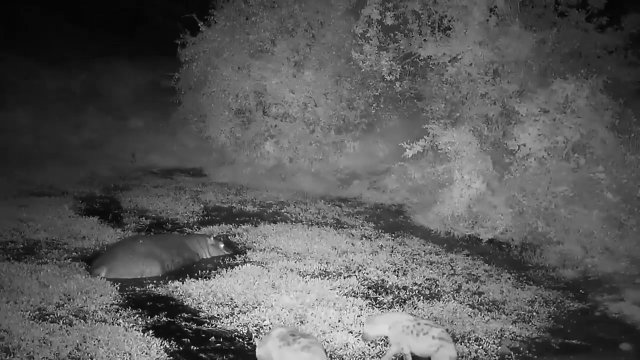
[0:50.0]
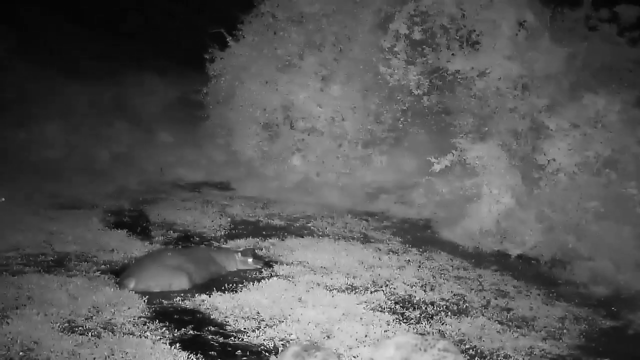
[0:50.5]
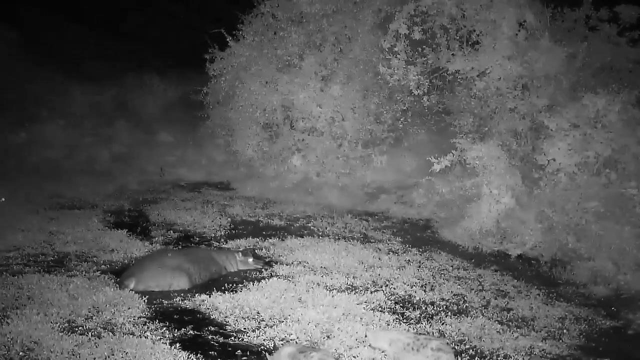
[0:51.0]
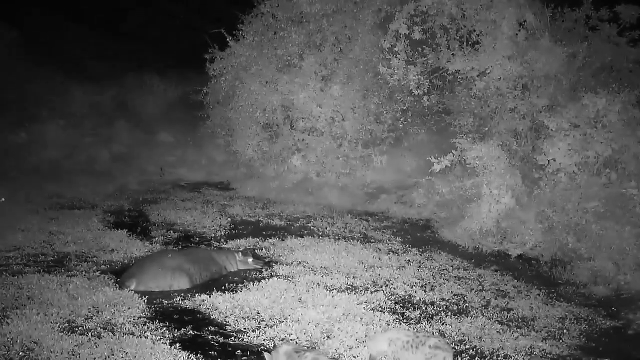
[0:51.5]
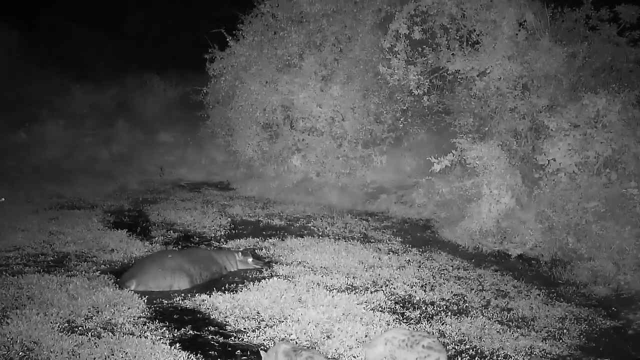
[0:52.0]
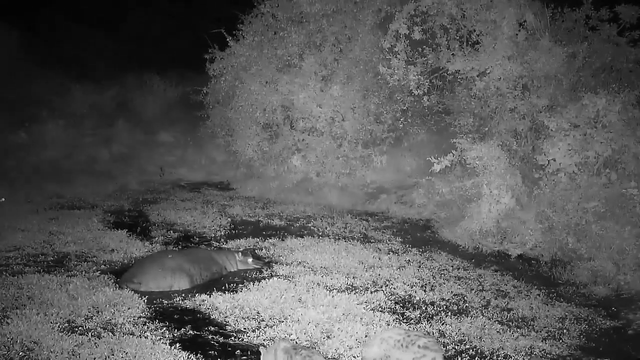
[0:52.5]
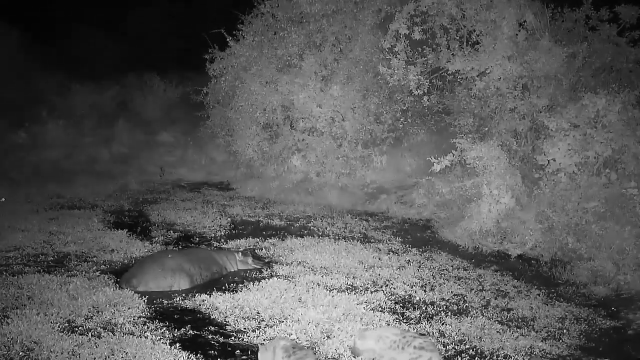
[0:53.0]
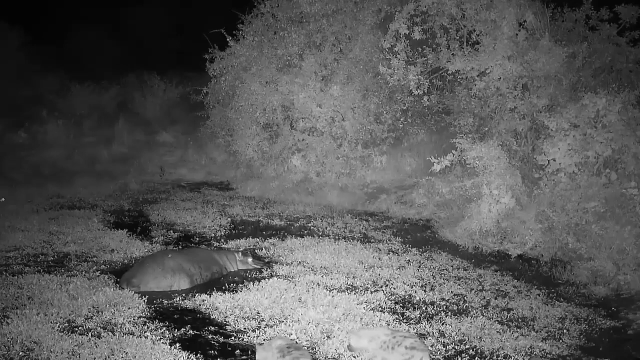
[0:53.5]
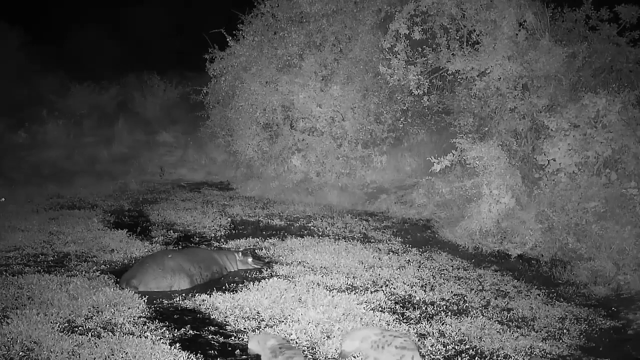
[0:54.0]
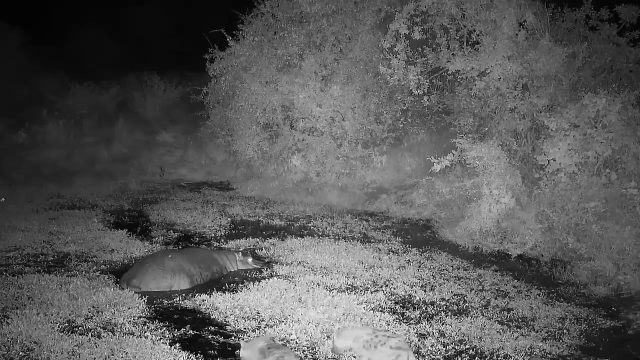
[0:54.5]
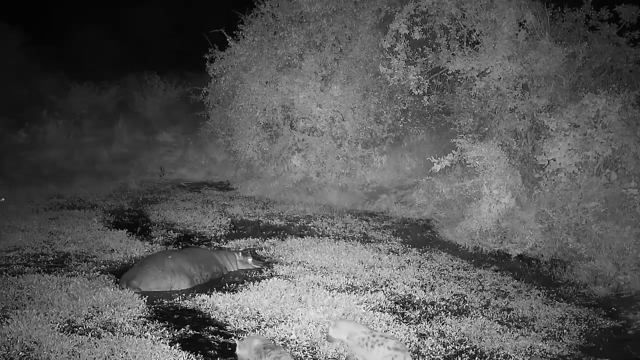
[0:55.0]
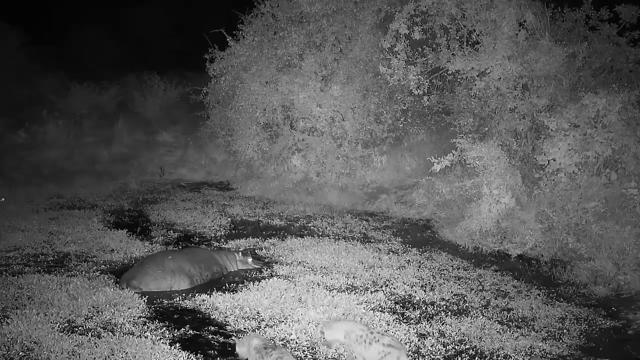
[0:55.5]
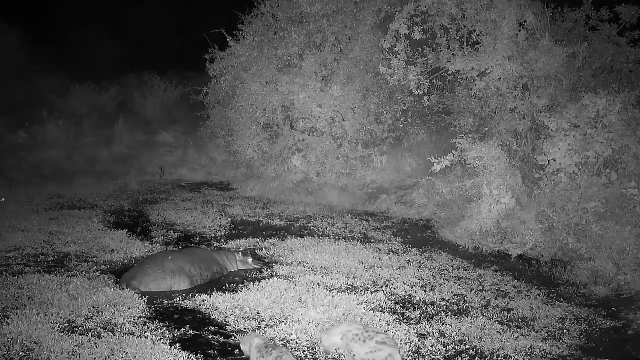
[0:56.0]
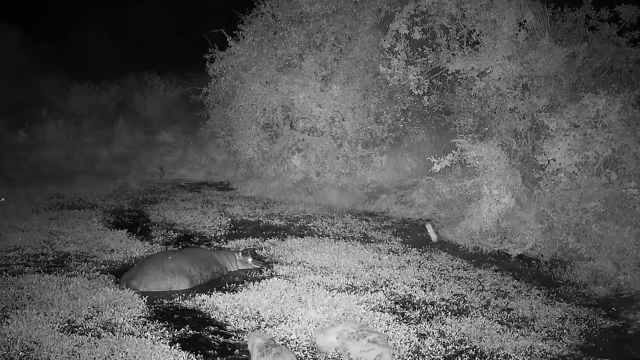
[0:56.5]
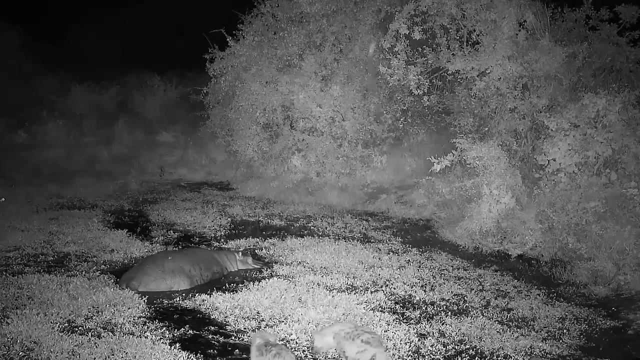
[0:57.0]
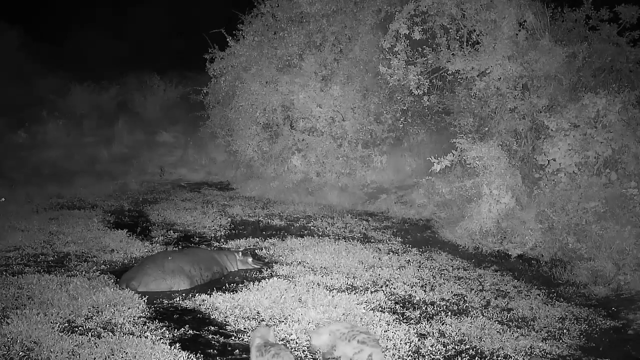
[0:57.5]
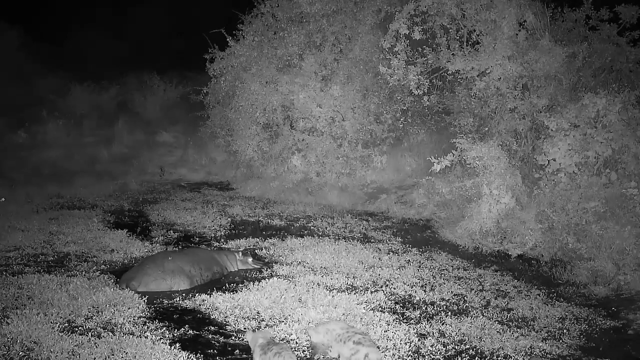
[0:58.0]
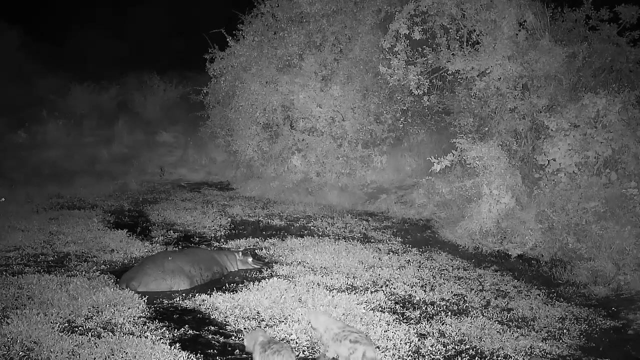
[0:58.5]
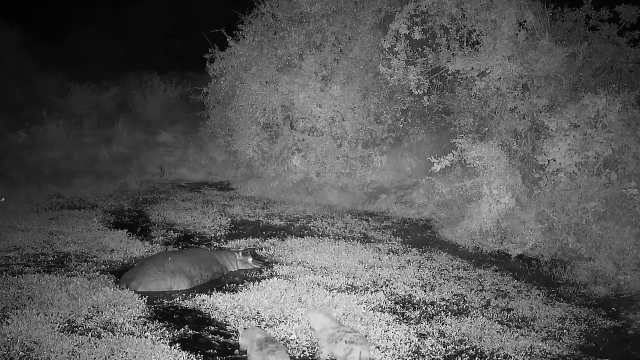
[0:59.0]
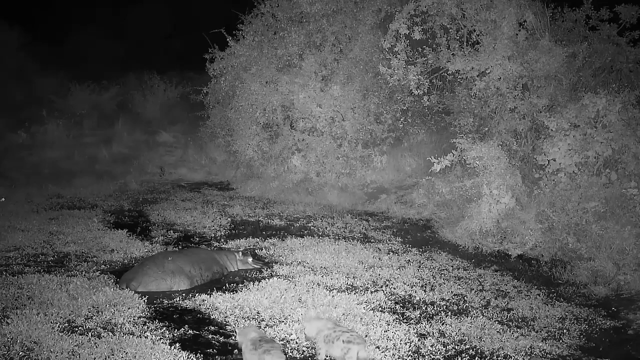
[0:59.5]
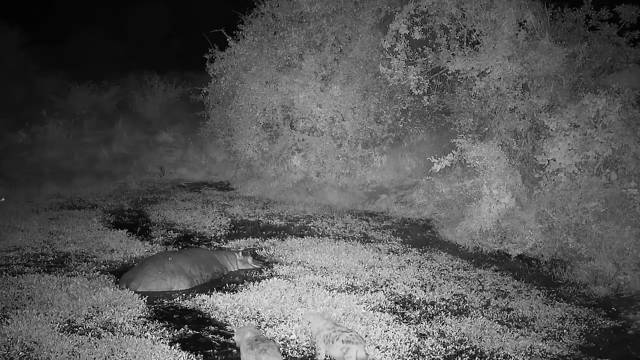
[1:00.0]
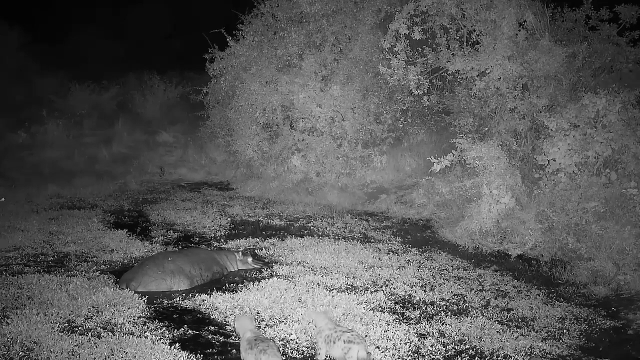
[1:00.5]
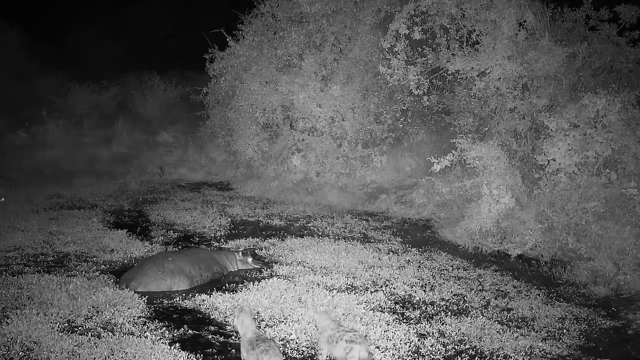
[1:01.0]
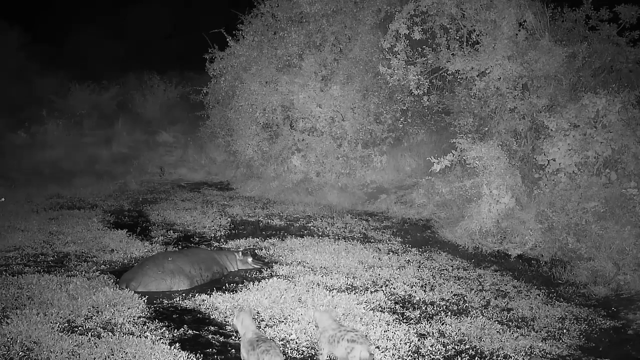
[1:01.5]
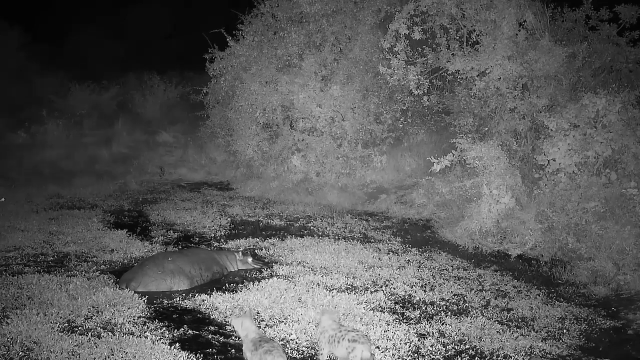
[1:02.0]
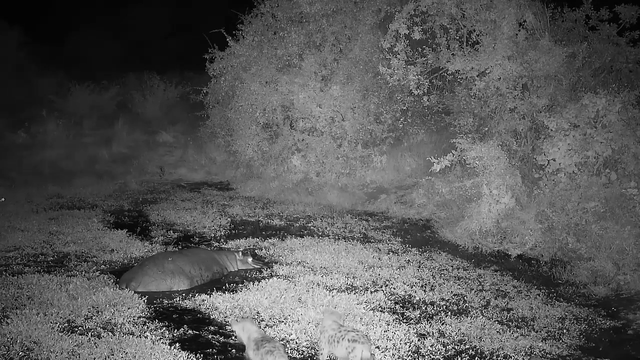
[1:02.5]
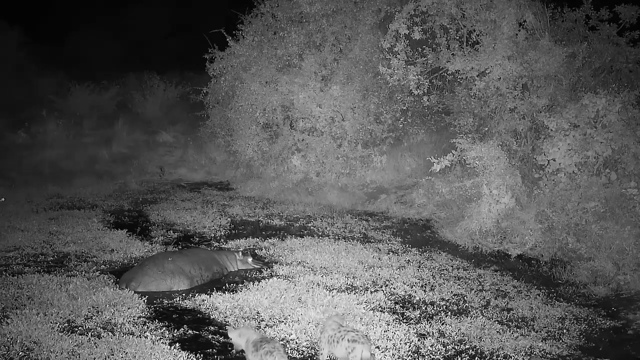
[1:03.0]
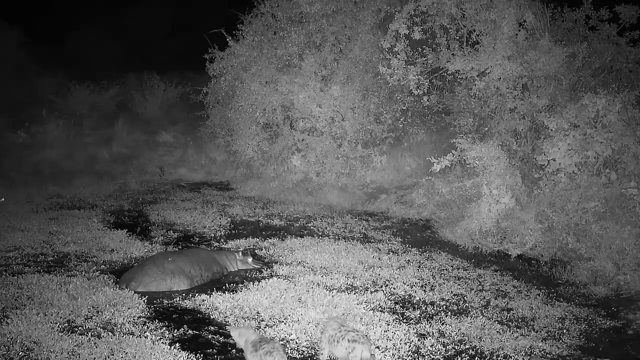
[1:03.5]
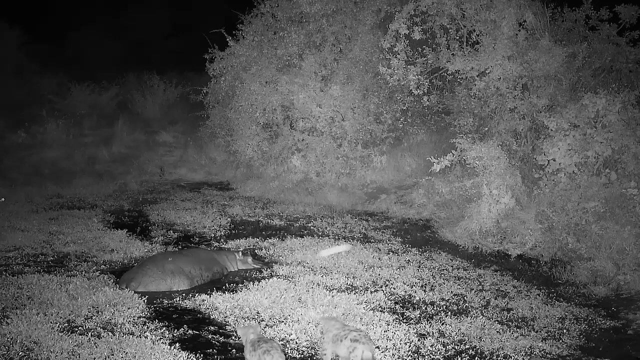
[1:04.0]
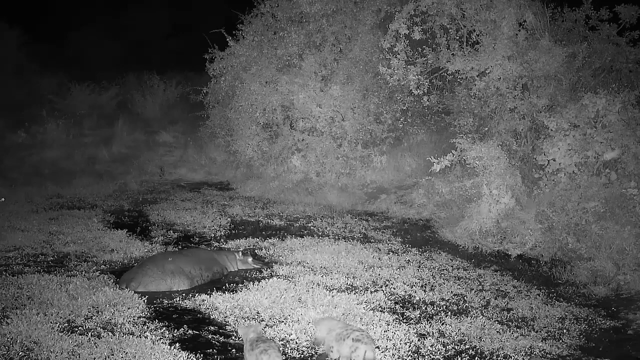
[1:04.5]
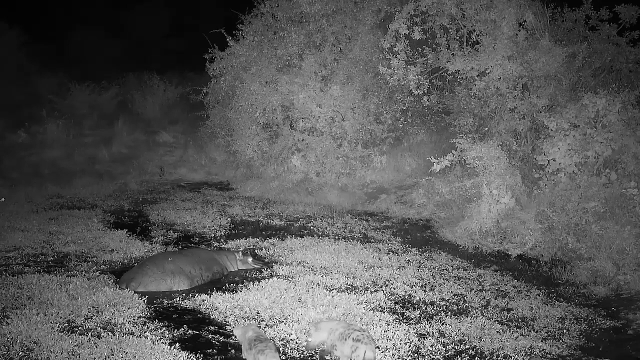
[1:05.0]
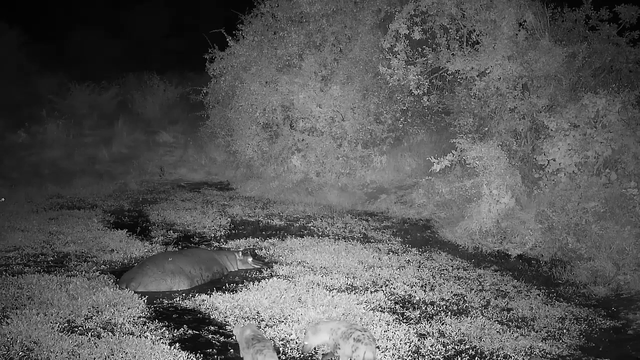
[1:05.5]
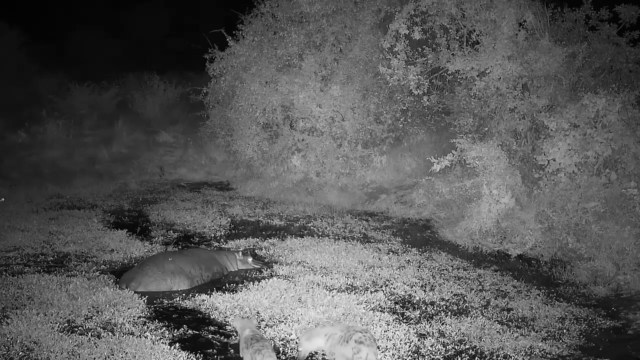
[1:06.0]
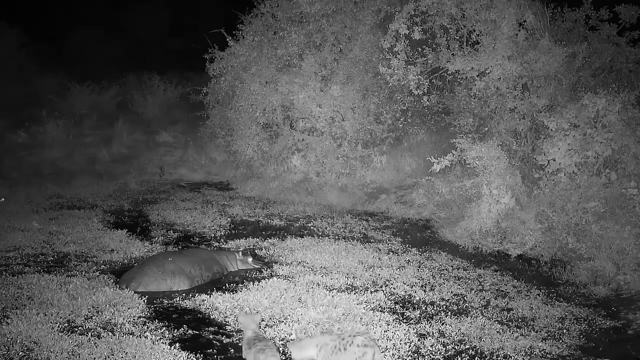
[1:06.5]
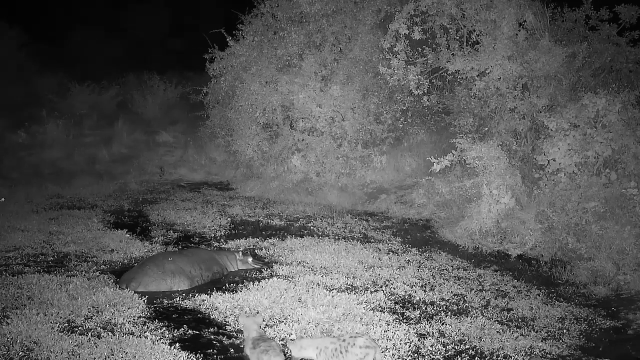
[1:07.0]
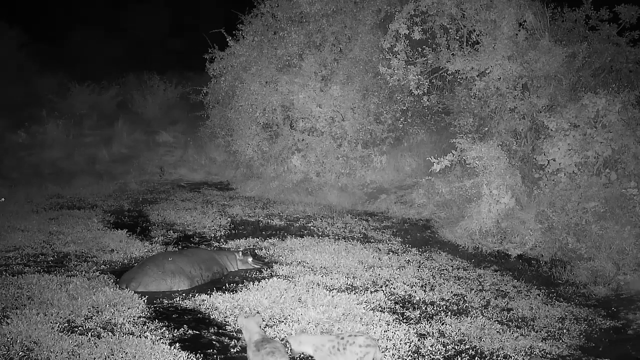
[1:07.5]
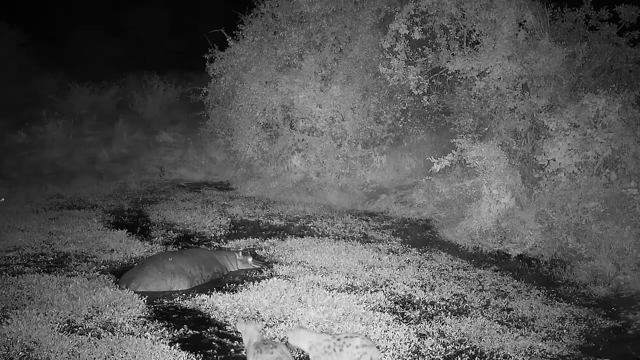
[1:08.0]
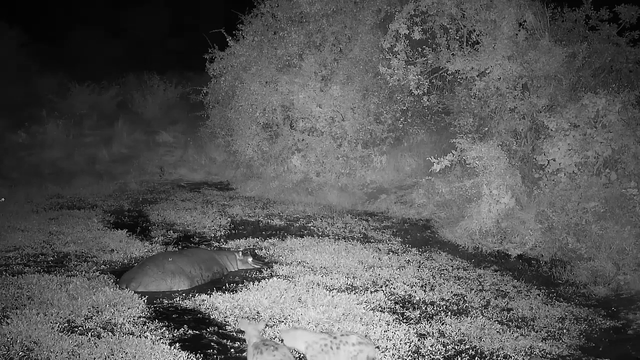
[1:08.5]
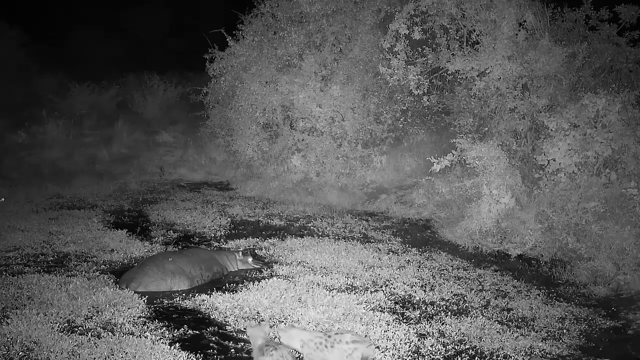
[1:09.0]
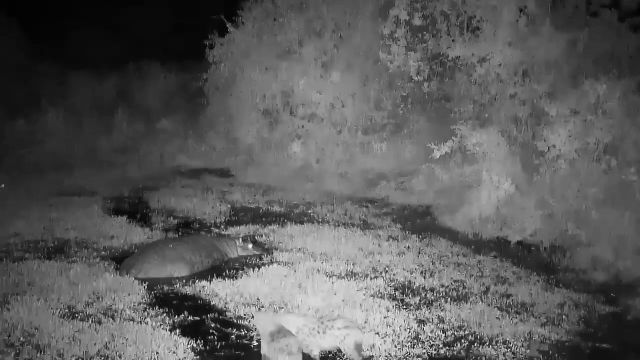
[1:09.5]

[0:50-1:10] An animal is sleeping inside water that looks dirty and appears black. Light reflects in the animal's eyes, so the eyes cannot be seen properly. Two animals, which seem small and young, try to go toward the sleeping animal; their eyes are also lit by the light pointed at them. Big trees stand in the background, and the black-and-white footage seems to show a zoo, with the tank of water that the animals use for drinking.